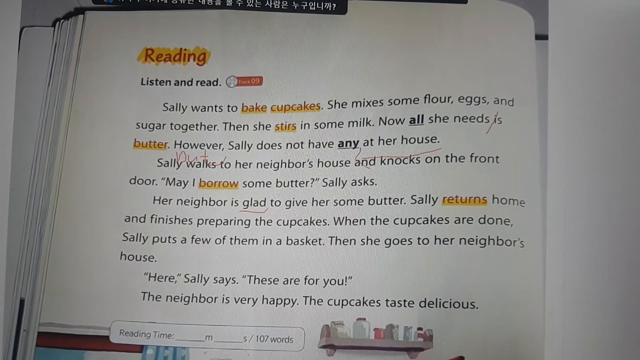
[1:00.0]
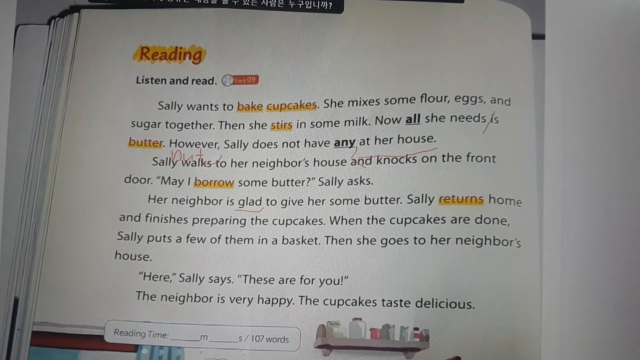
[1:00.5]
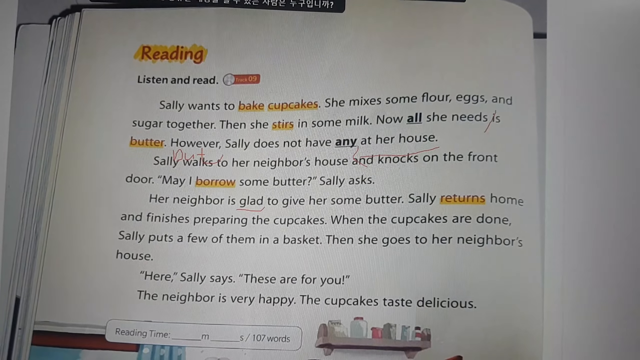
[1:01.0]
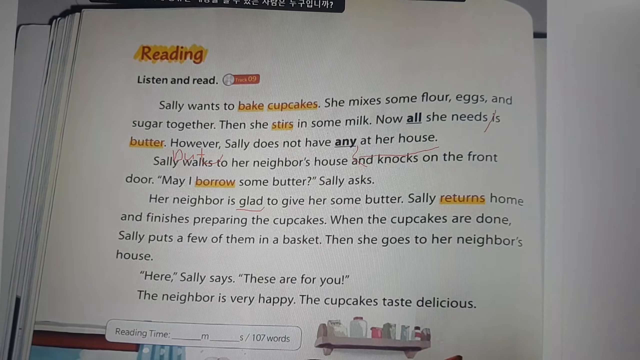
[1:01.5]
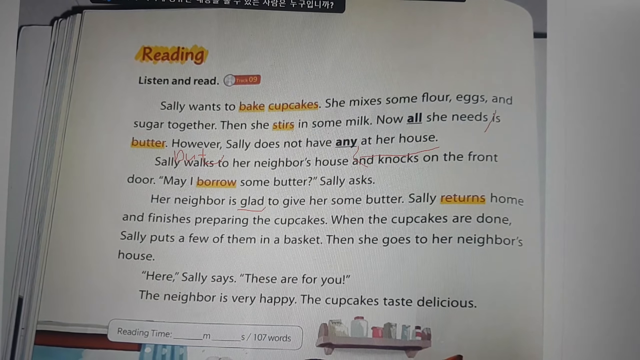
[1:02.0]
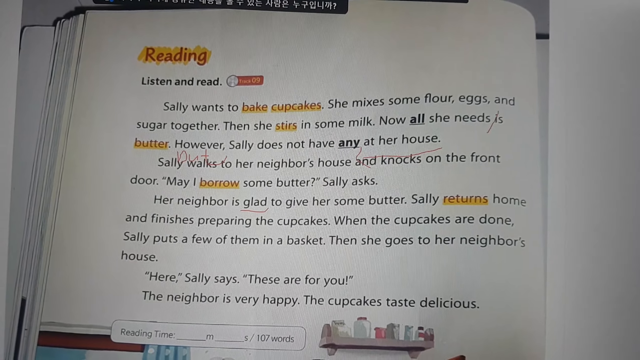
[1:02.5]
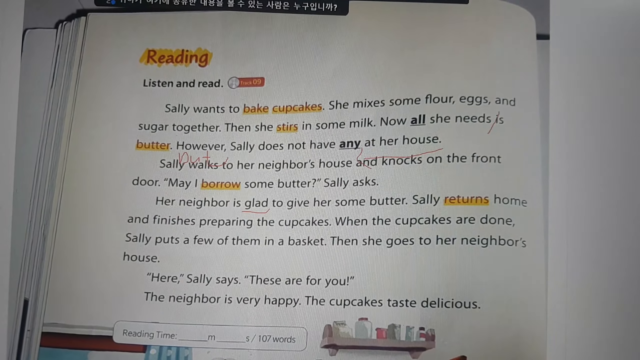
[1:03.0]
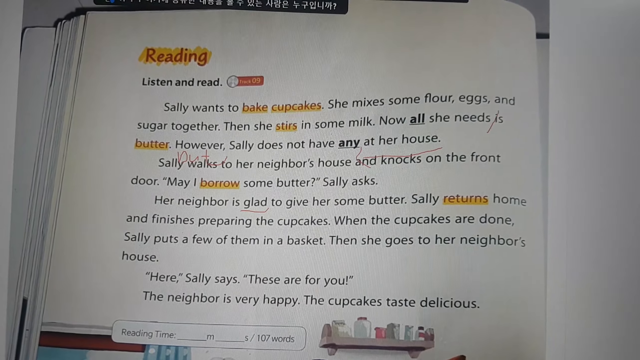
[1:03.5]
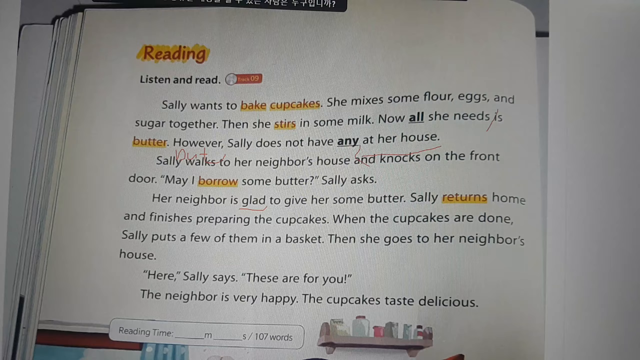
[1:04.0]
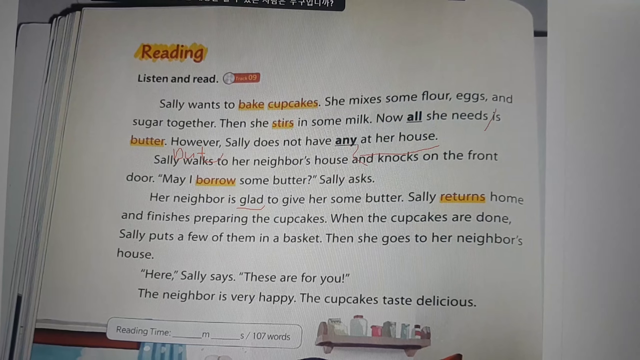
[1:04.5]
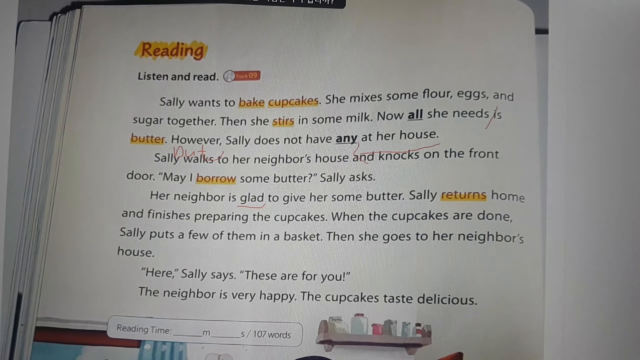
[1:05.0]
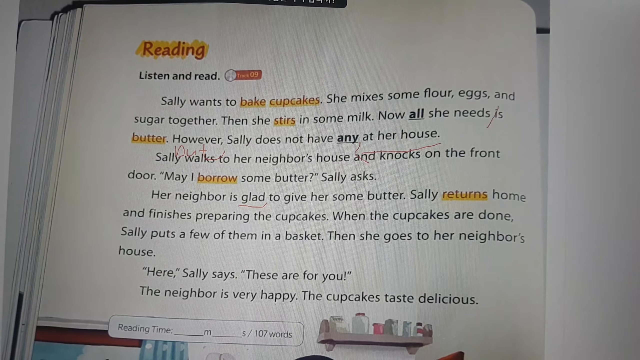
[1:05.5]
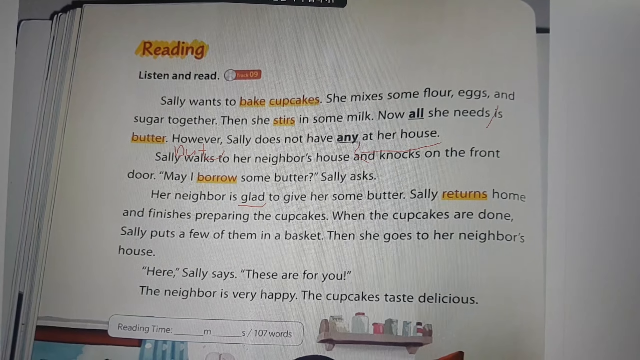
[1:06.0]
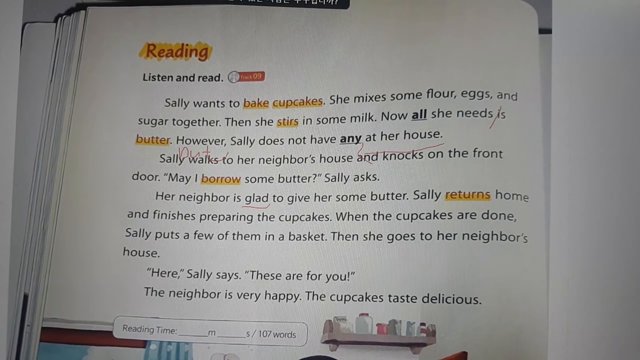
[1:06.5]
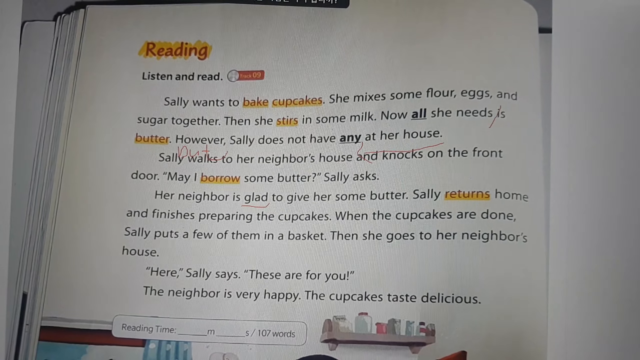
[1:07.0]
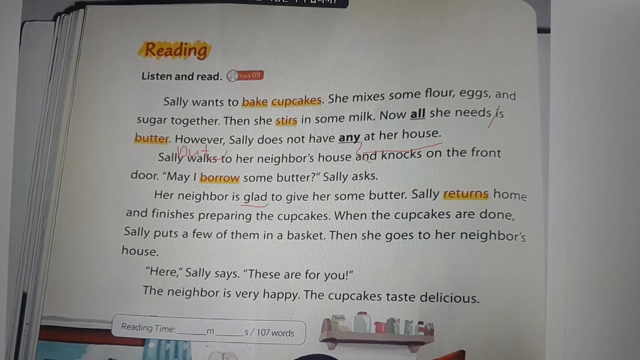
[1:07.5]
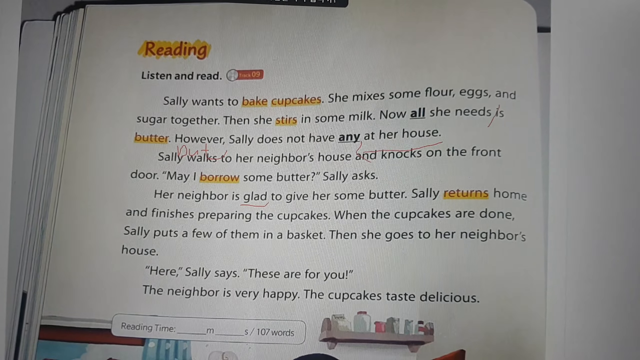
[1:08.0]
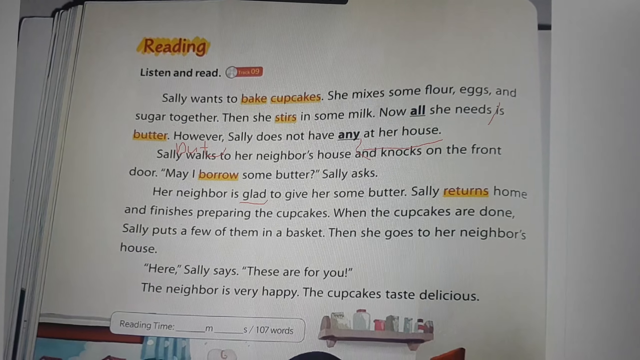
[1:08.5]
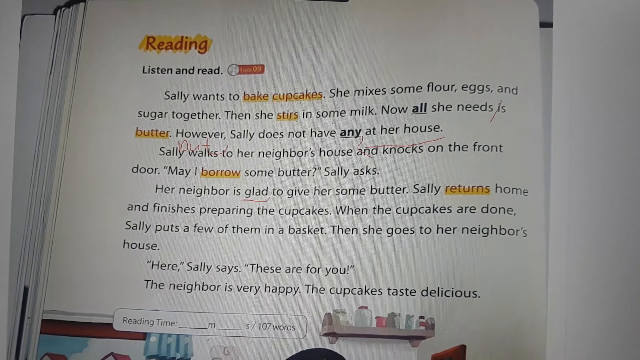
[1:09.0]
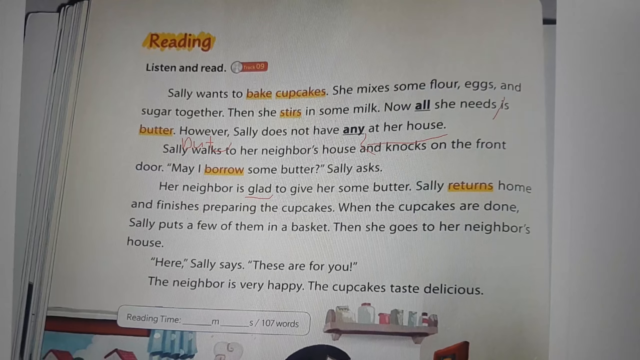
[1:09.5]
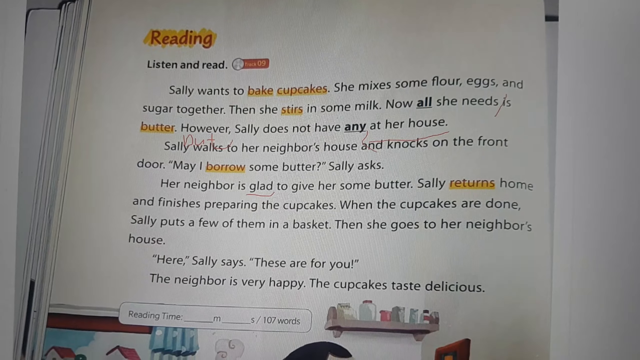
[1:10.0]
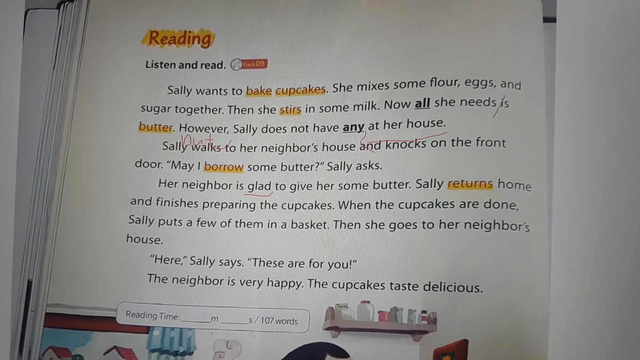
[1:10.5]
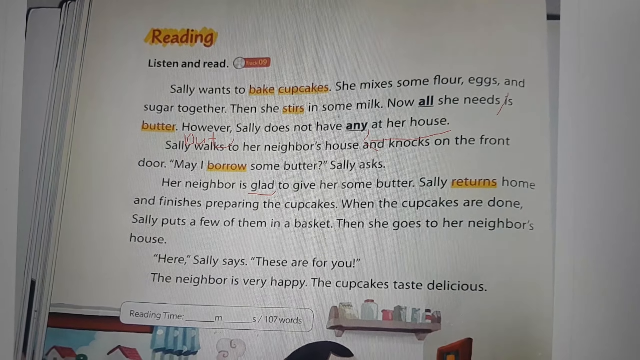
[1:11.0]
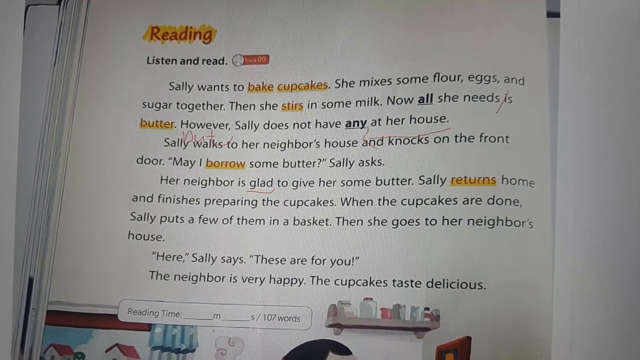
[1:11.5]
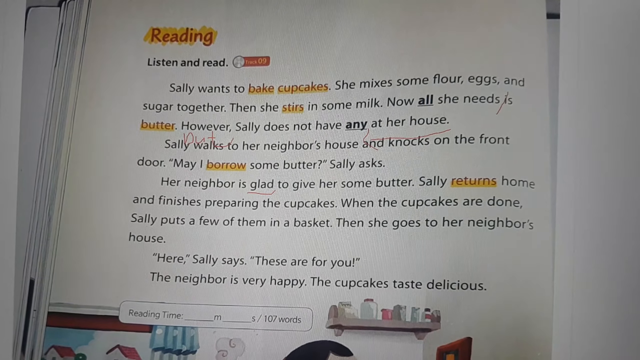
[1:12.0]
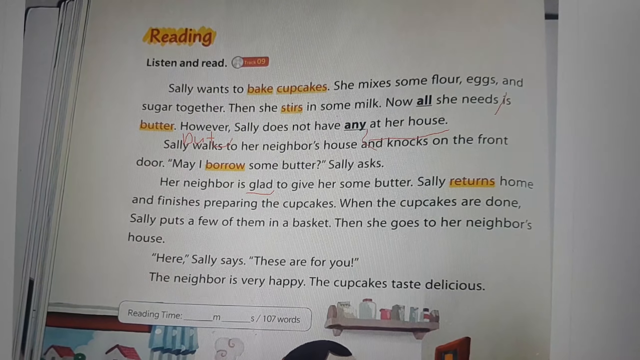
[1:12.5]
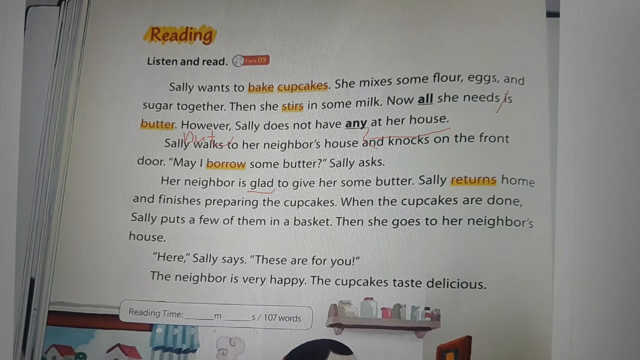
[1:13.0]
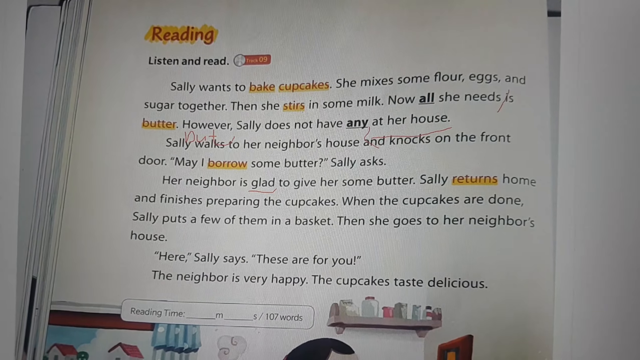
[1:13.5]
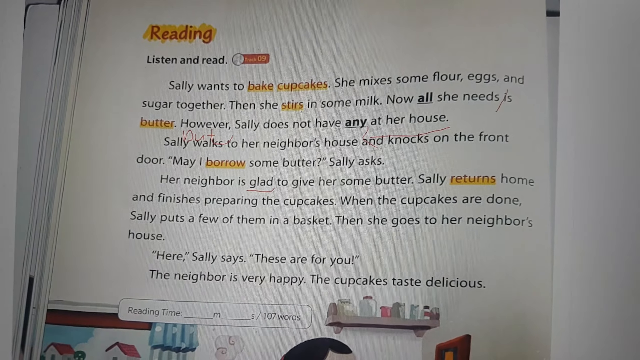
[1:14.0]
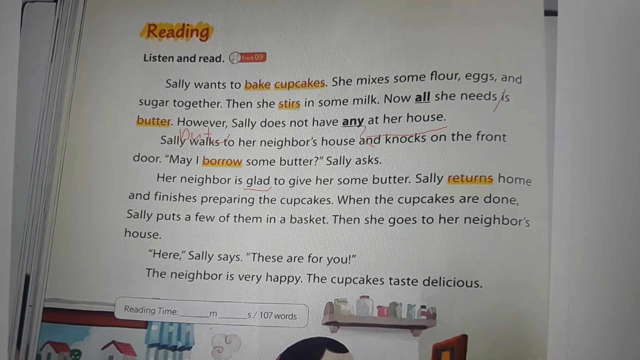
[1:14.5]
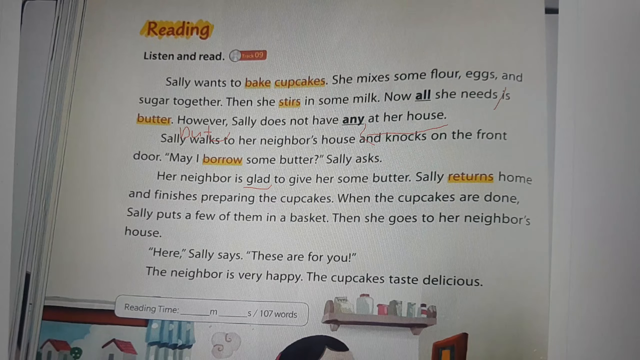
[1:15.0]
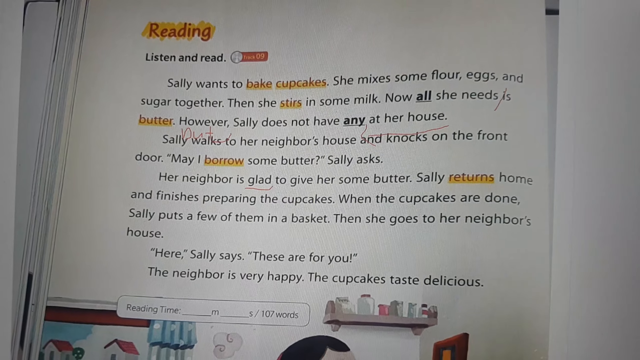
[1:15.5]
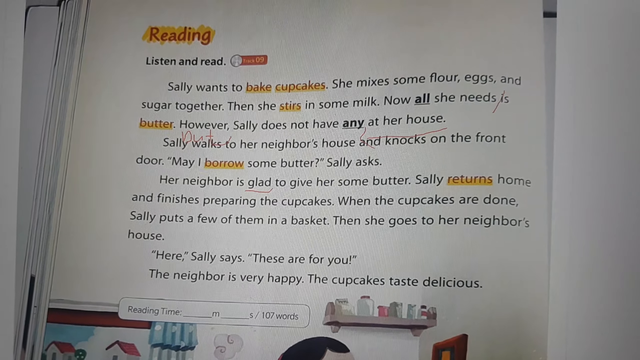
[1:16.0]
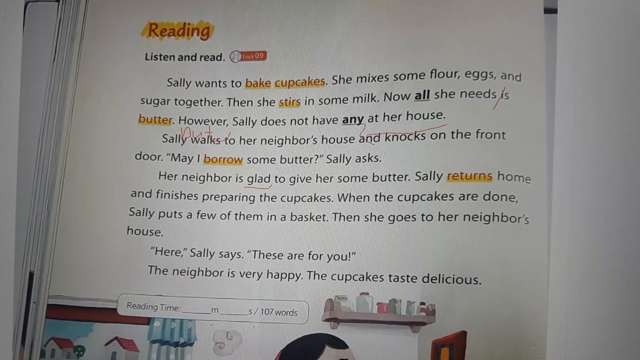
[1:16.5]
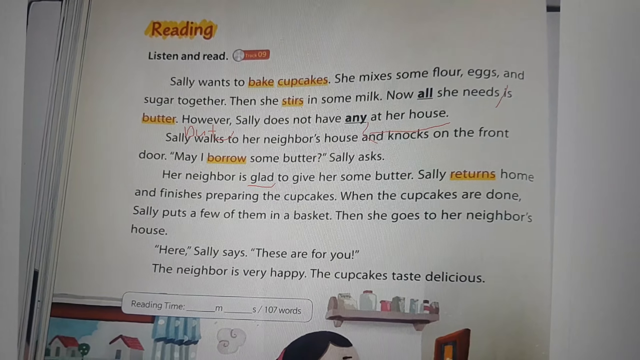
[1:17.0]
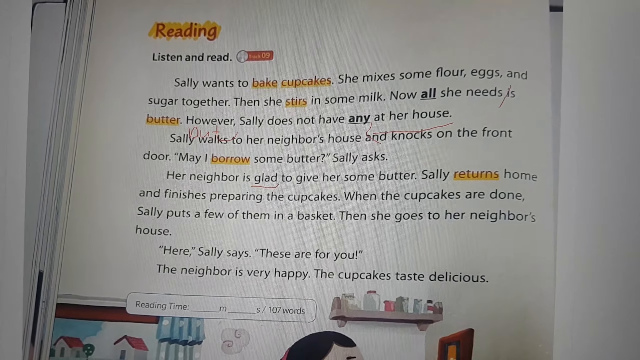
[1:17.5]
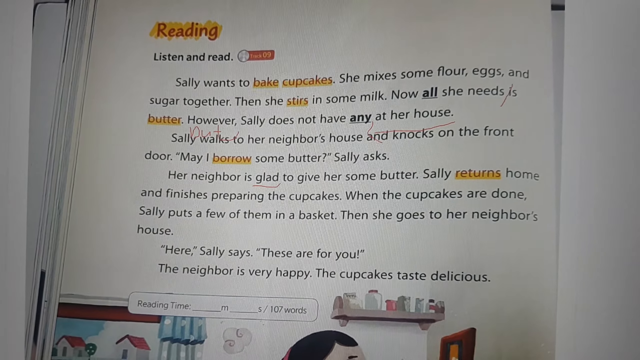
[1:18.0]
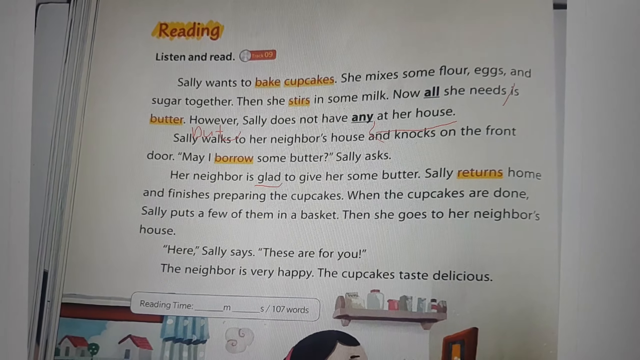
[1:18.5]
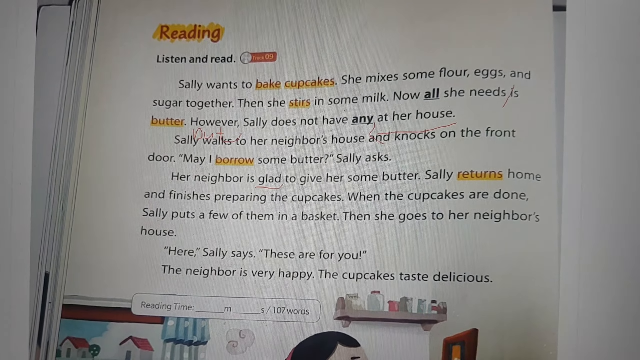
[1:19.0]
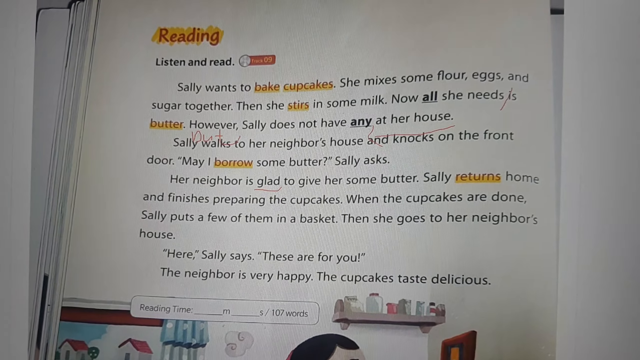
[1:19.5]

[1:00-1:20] The camera is still on the reading page, which has several marks on it. Where it says "now all she needs is," there is a mark like a forward slash crossing it. Above "and knocks on" there is a red arrow pointing to the left. There is also a red underline under the word "glad."